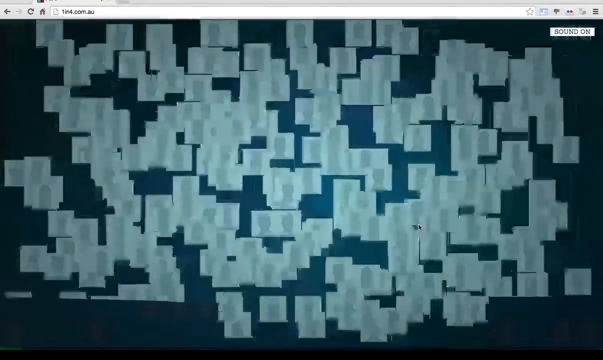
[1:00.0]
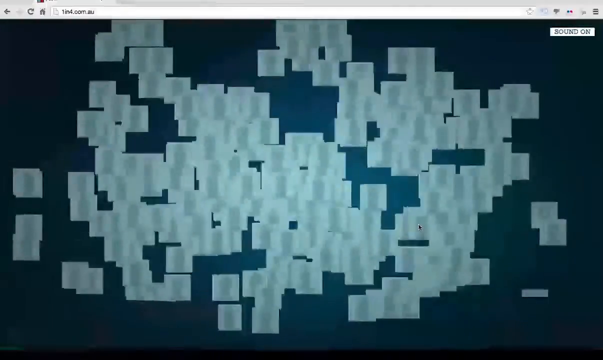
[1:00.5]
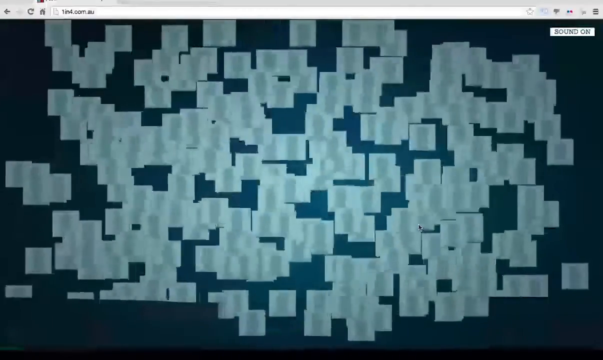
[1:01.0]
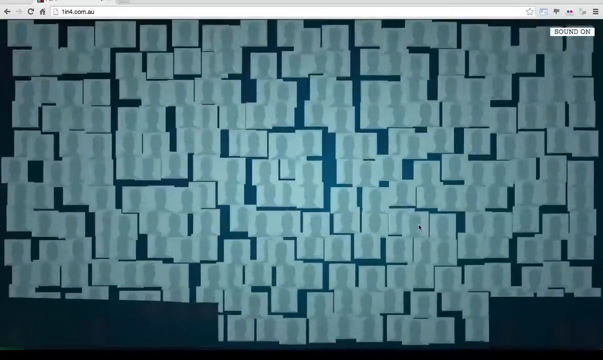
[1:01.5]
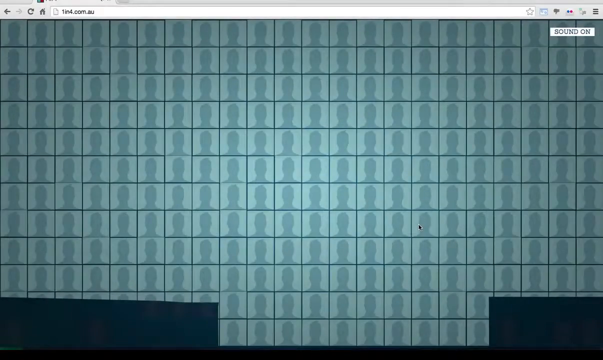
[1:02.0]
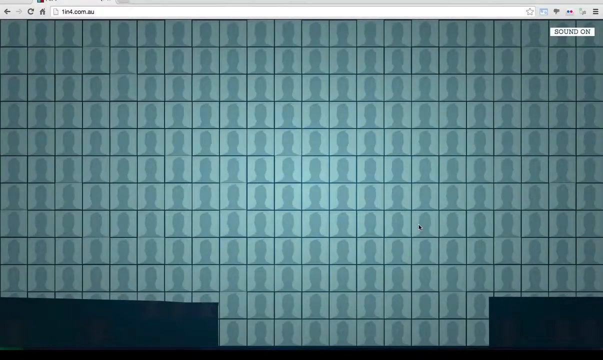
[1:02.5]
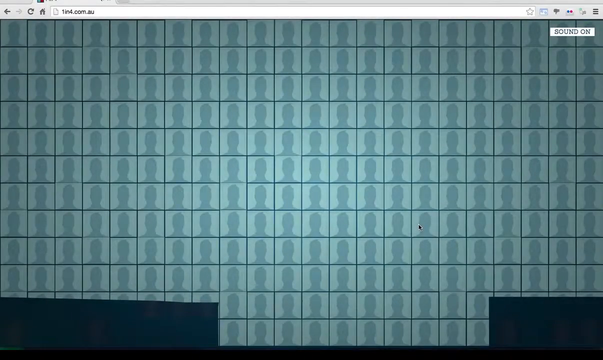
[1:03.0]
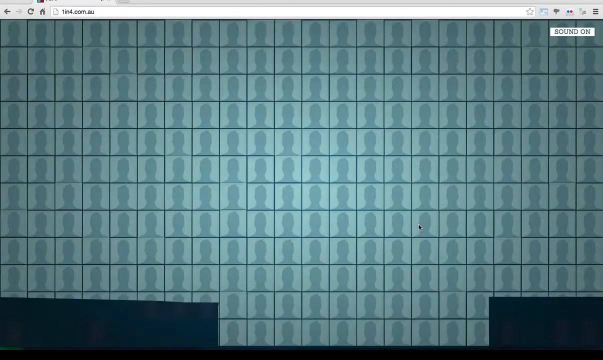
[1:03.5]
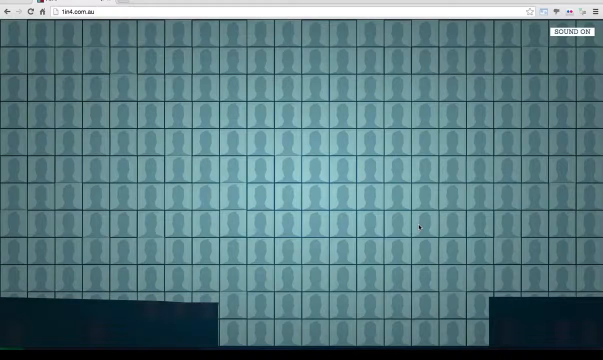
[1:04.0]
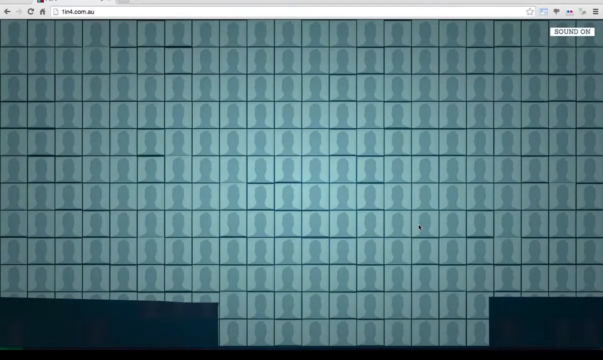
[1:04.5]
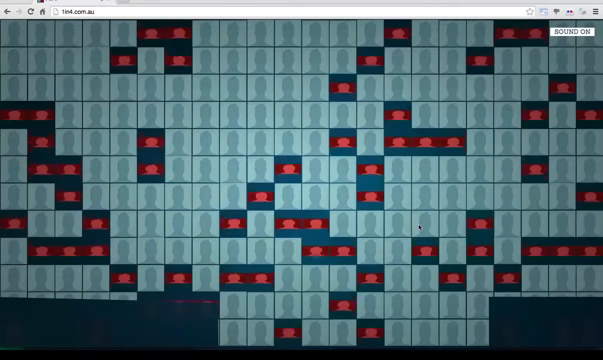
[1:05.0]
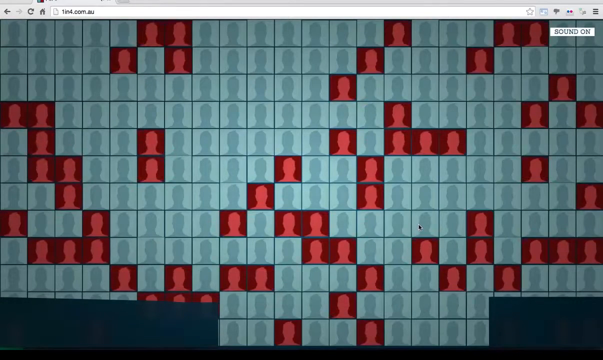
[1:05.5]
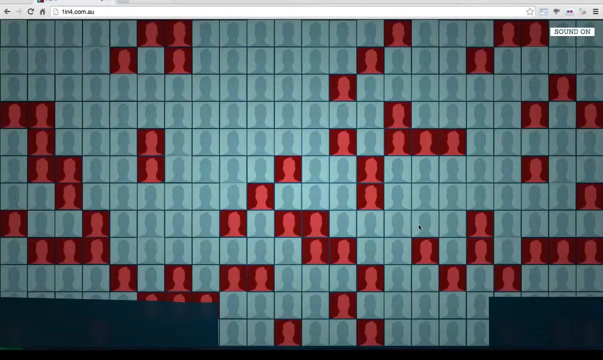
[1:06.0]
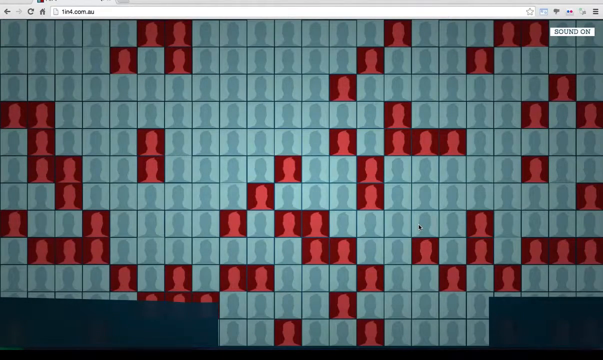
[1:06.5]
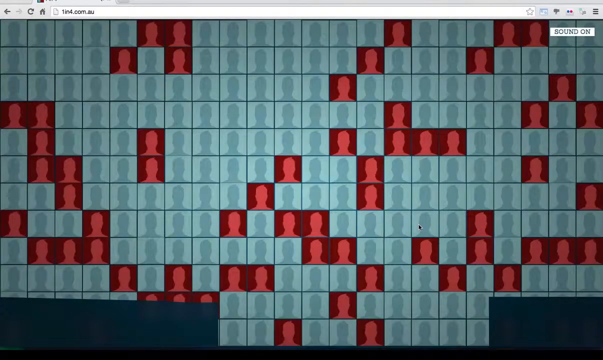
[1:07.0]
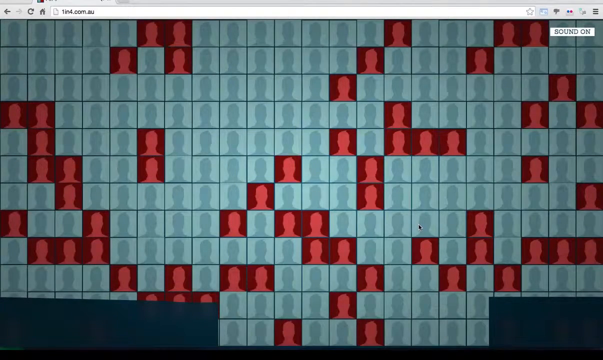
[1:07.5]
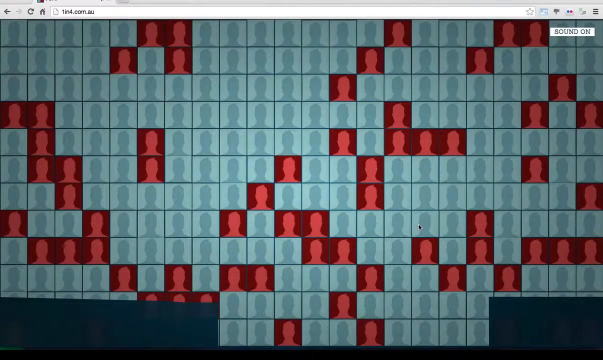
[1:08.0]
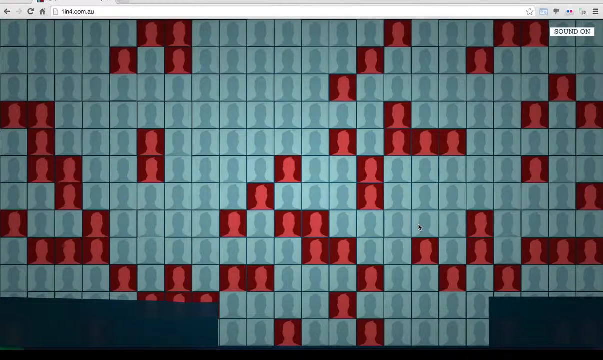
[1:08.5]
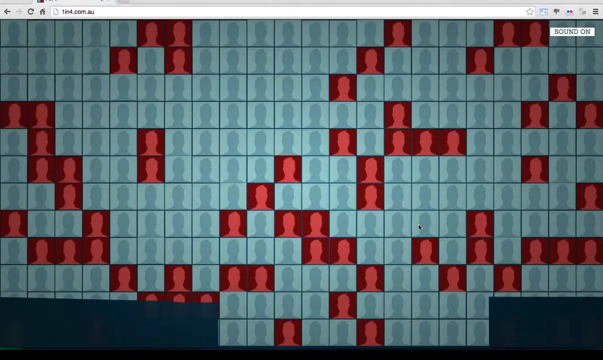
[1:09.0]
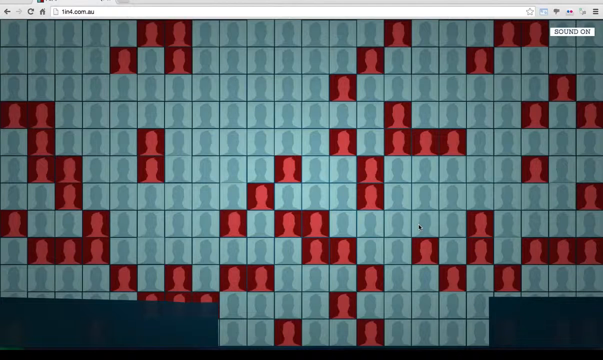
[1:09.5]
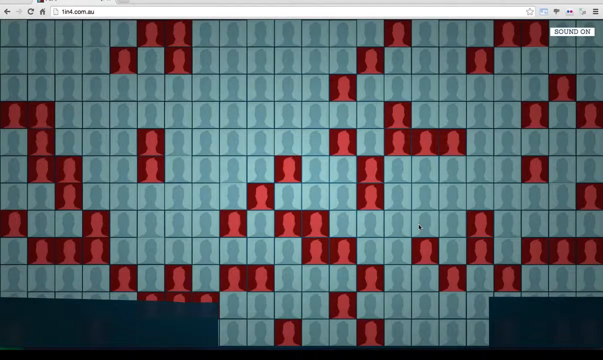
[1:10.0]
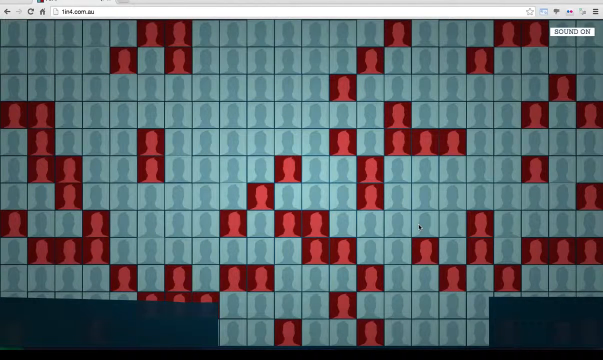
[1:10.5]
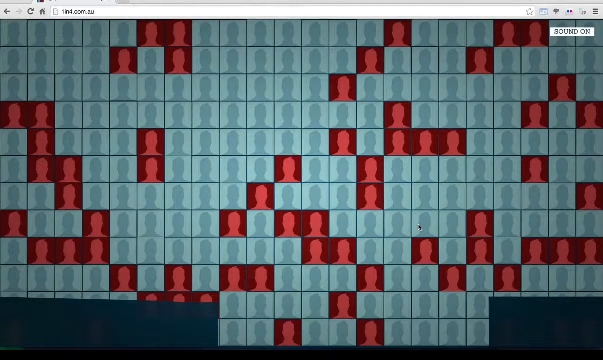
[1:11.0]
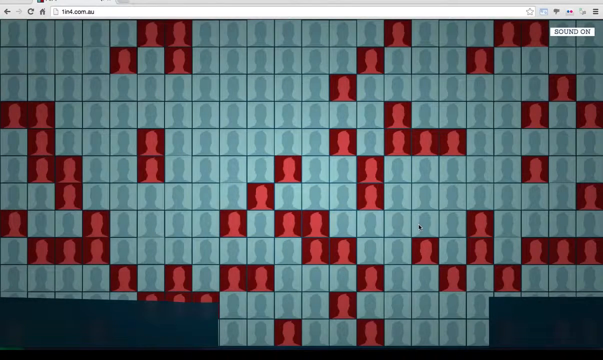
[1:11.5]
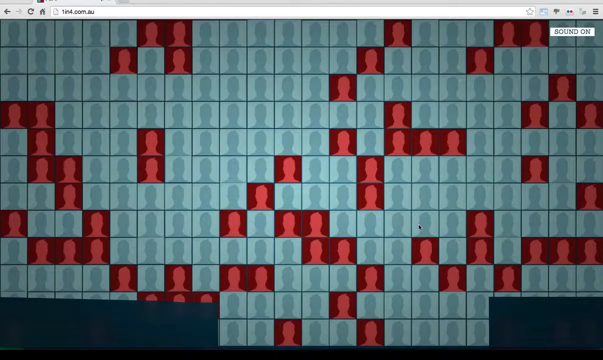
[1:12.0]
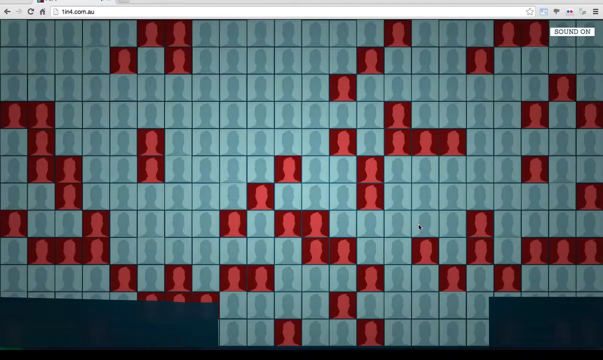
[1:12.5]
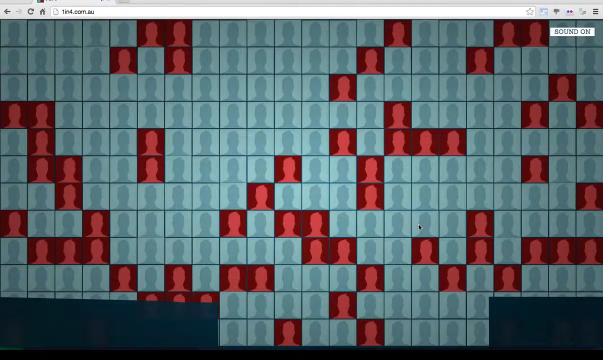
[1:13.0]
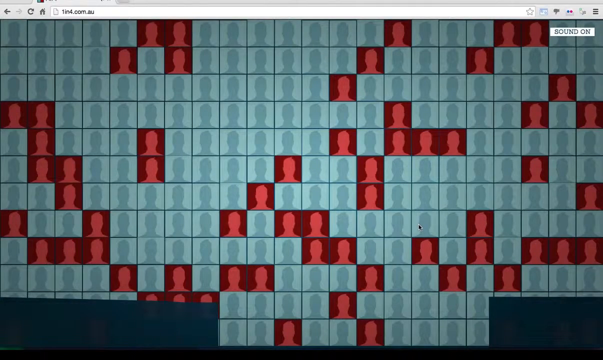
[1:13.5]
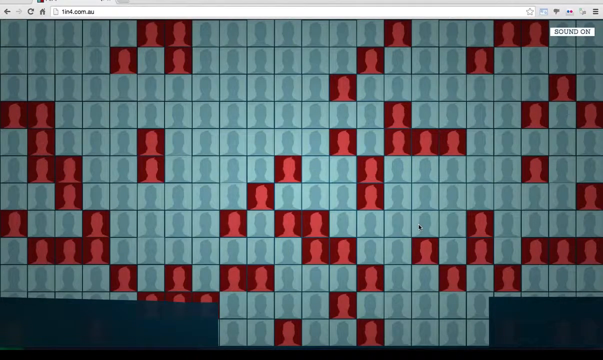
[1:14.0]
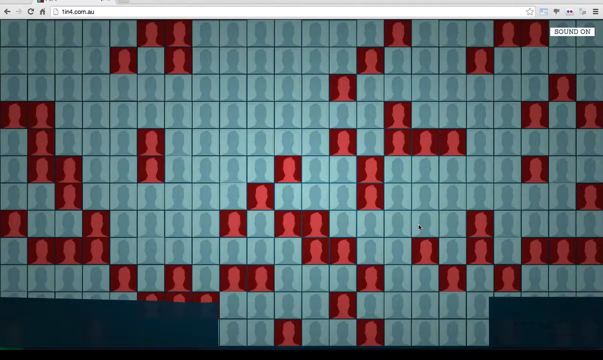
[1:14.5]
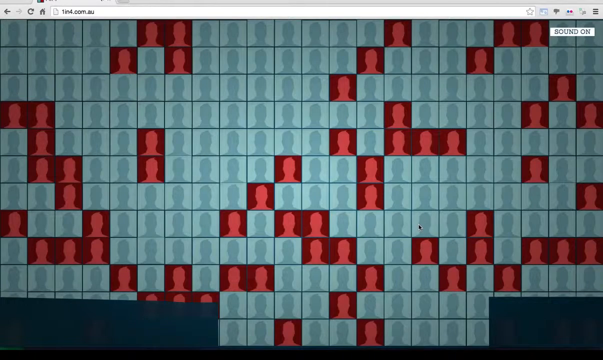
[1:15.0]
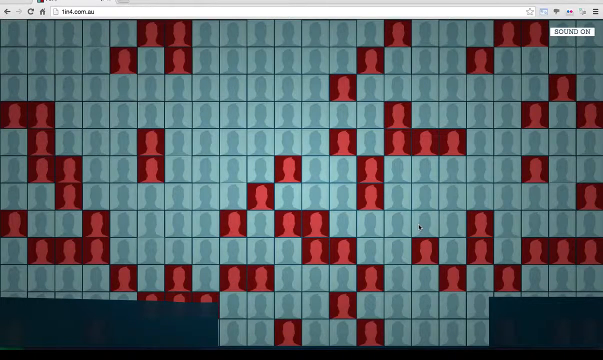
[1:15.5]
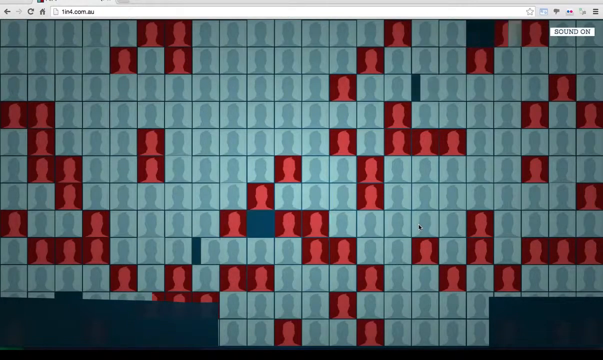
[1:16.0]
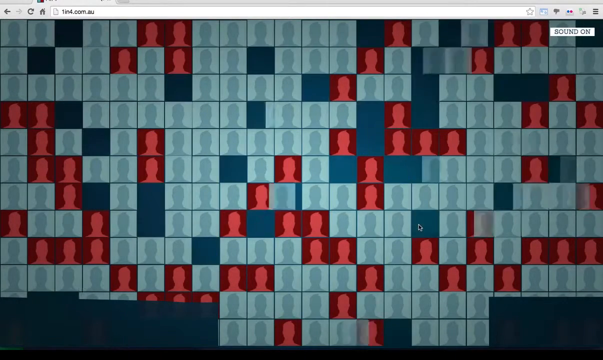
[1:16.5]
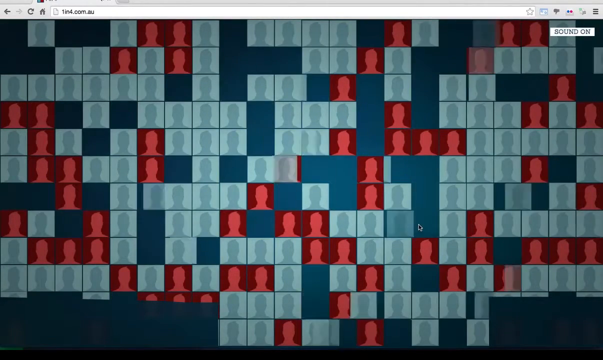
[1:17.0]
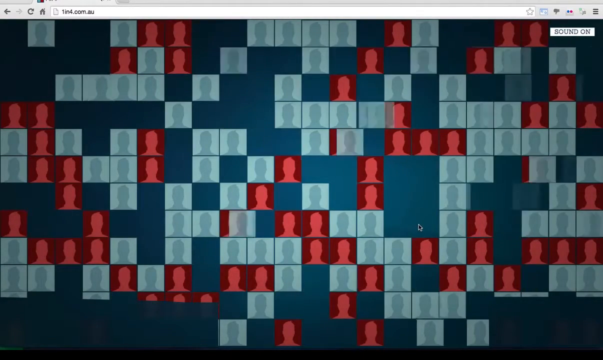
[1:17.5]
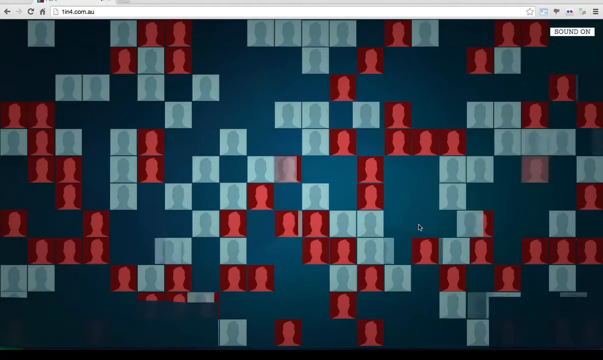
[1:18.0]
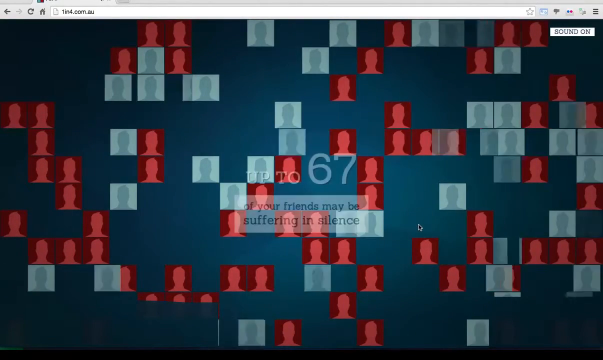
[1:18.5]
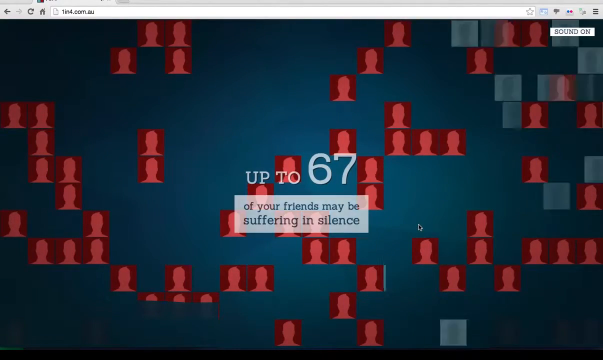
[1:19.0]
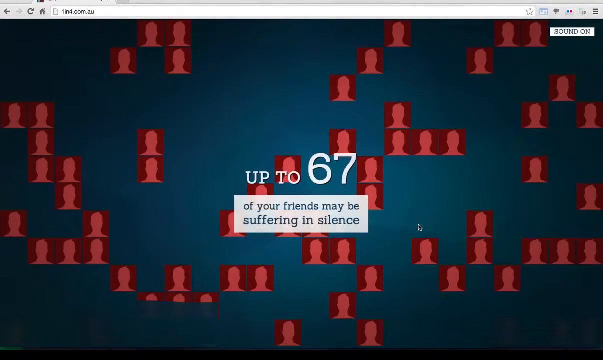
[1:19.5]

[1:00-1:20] The anonymized silhouettes representing the friends are reassembled into an order, and certain ones turn red on a black background, while the normal ones are a darker greenish on an apparently teal background. The teal ones are then removed so only the red ones remain, and white lettering reads "up to 67," with "67" larger than "up to," above a white sub-box reading "of your friends may be suffering in silence." This is set against the dark screen with the remaining red silhouettes, which look like maybe a third, or a quarter to a fifth, of the friends. The scrambling all happens against the same slide and seems meant to anonymize the pictures so no one can be told apart.